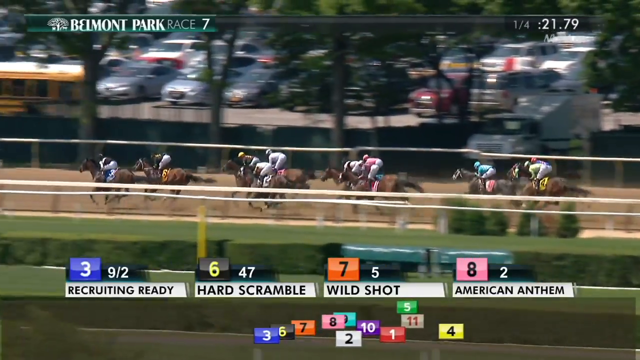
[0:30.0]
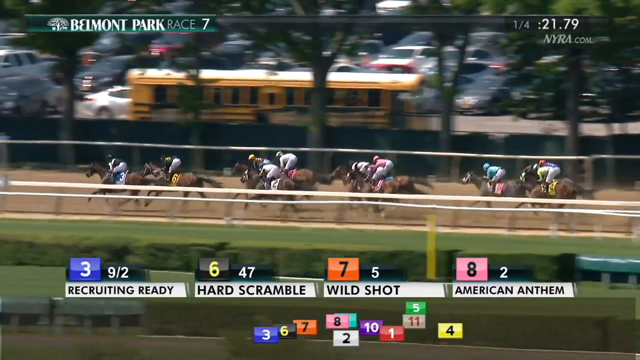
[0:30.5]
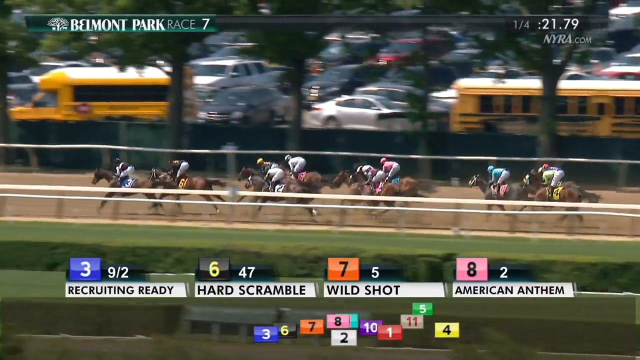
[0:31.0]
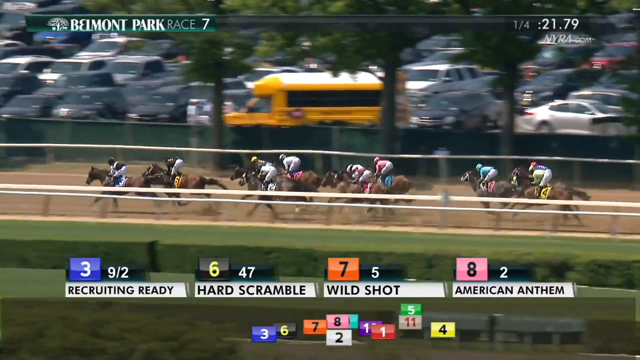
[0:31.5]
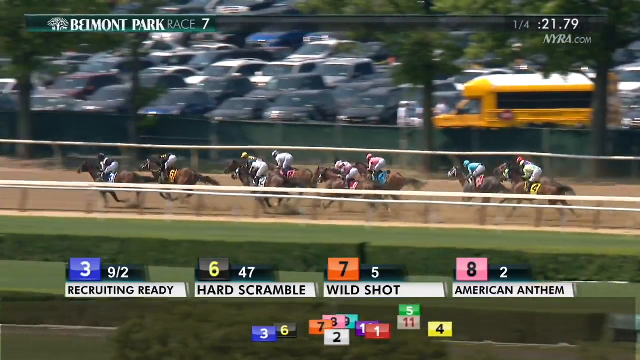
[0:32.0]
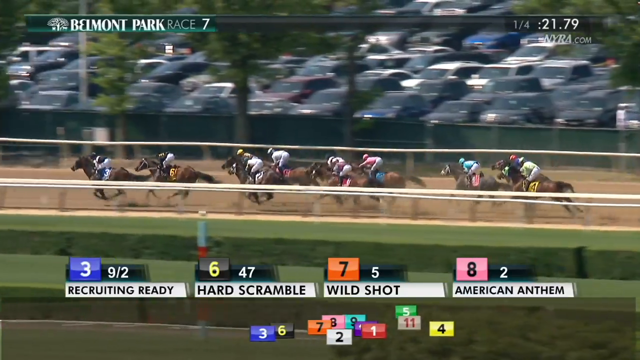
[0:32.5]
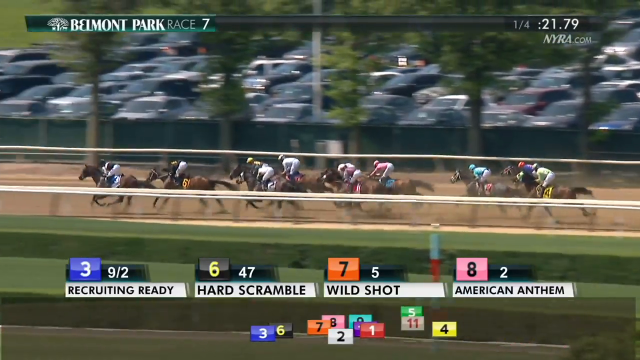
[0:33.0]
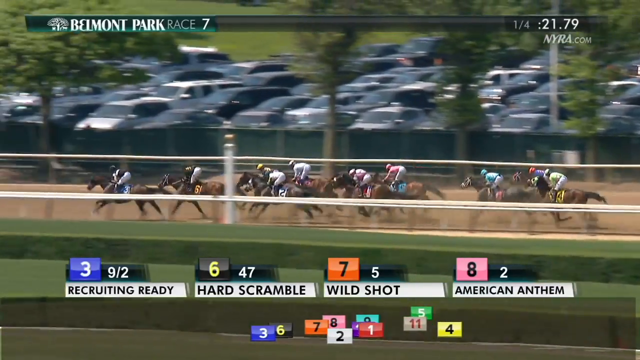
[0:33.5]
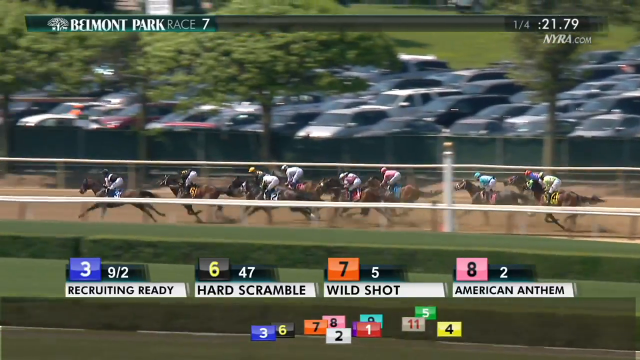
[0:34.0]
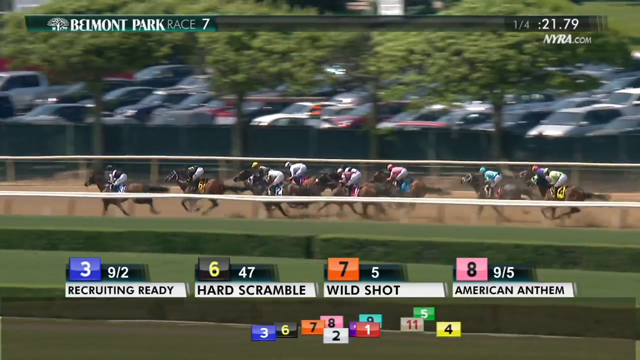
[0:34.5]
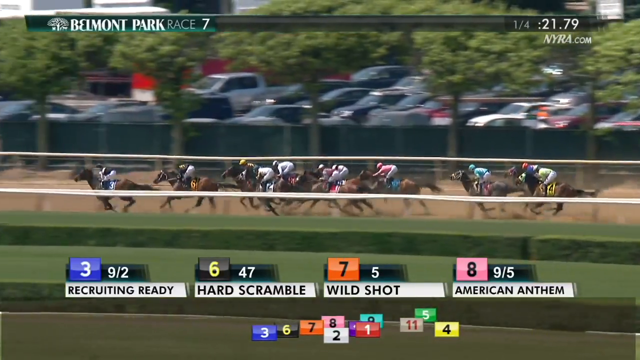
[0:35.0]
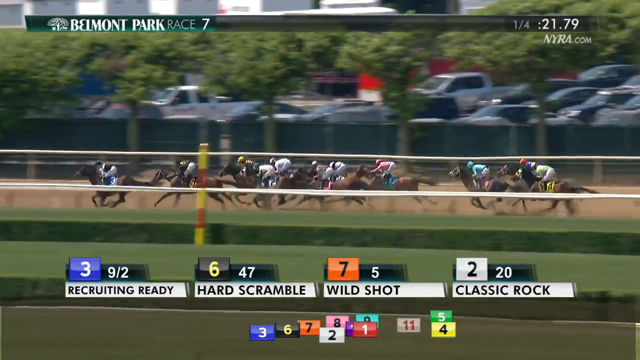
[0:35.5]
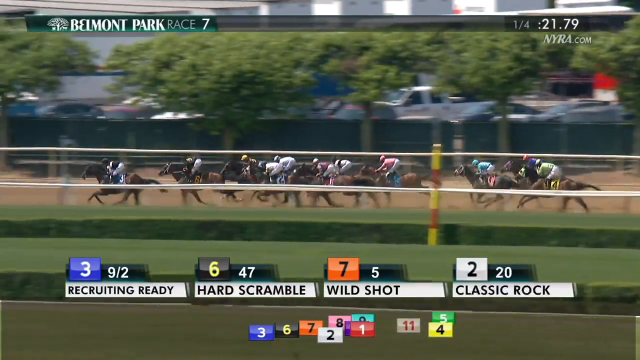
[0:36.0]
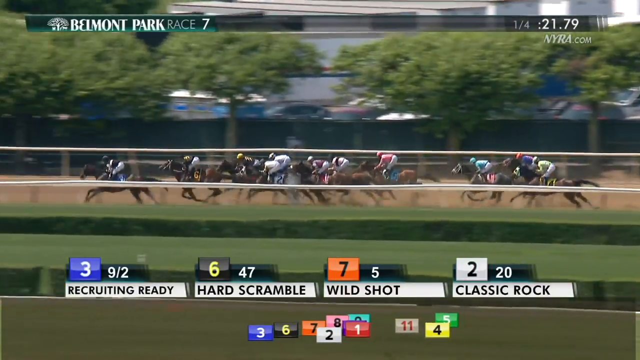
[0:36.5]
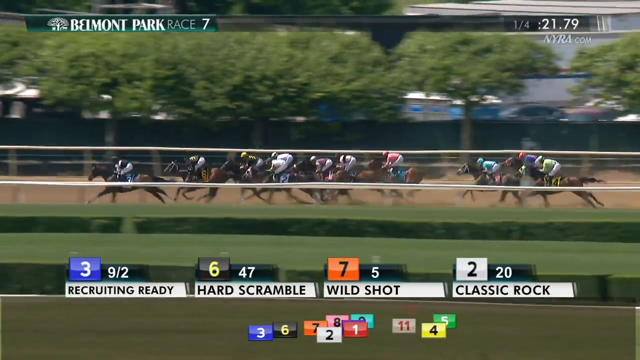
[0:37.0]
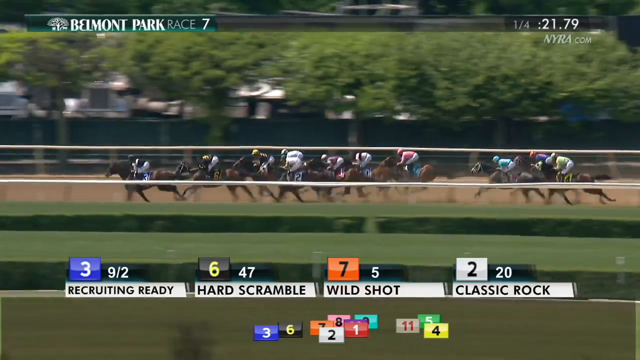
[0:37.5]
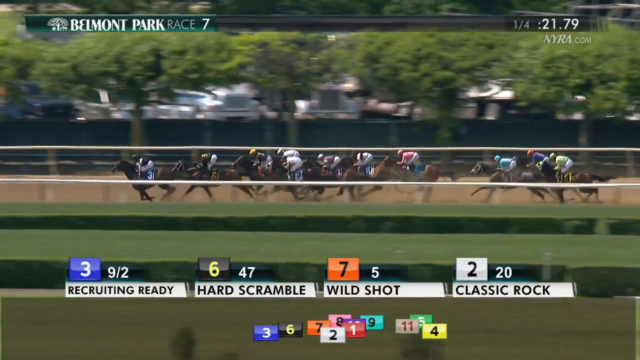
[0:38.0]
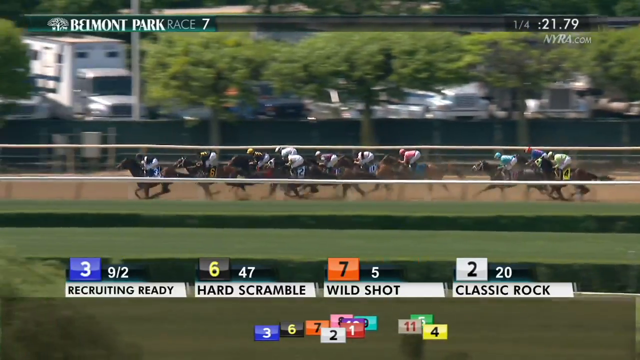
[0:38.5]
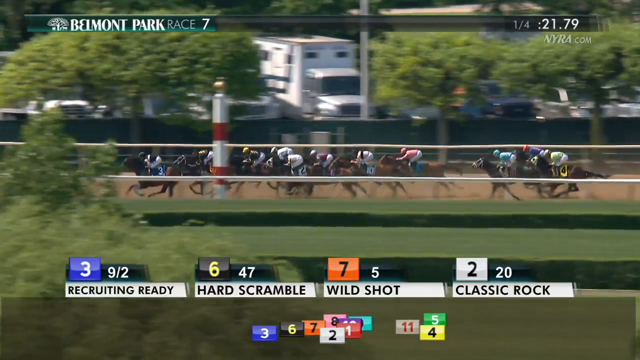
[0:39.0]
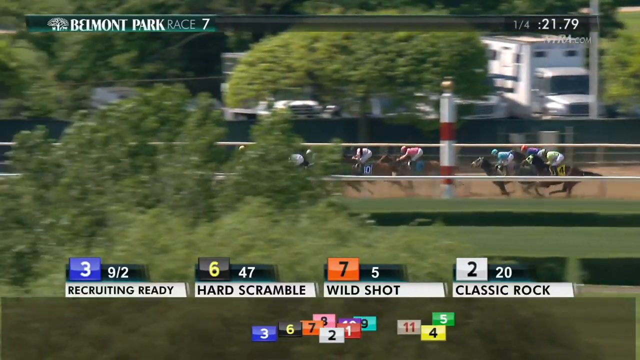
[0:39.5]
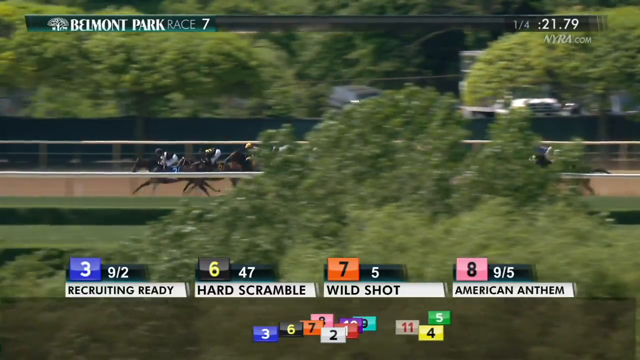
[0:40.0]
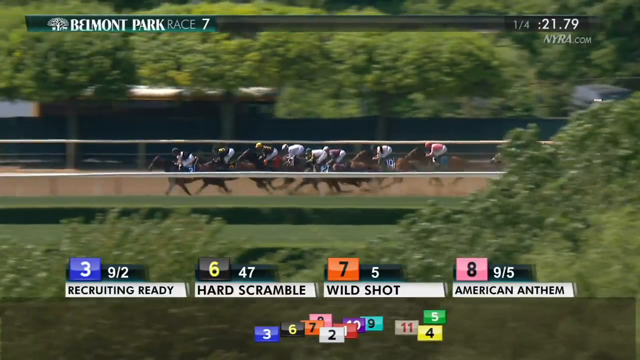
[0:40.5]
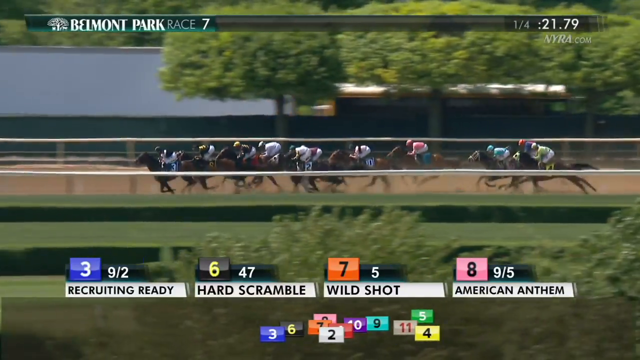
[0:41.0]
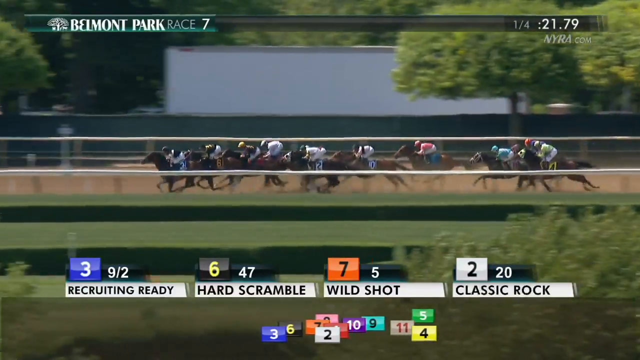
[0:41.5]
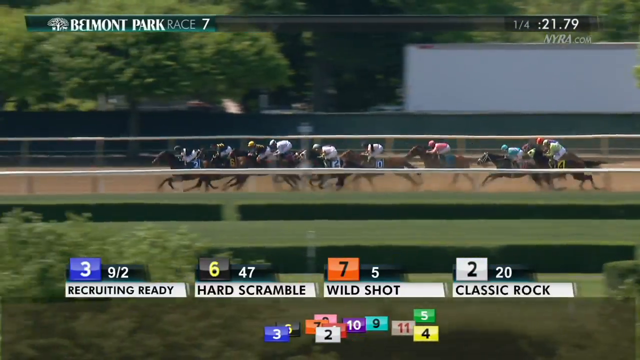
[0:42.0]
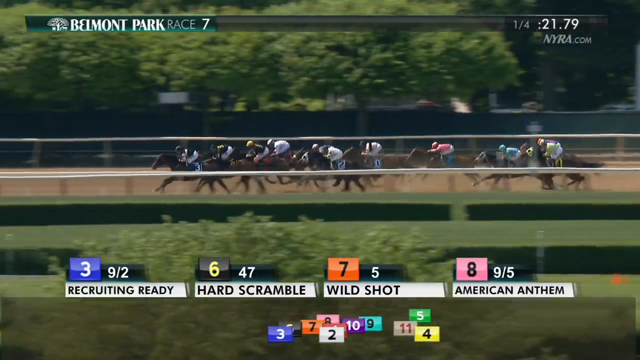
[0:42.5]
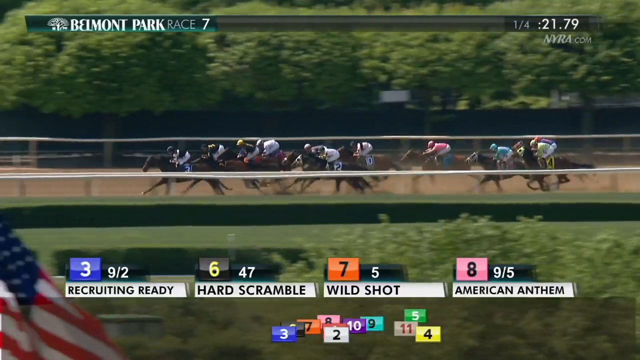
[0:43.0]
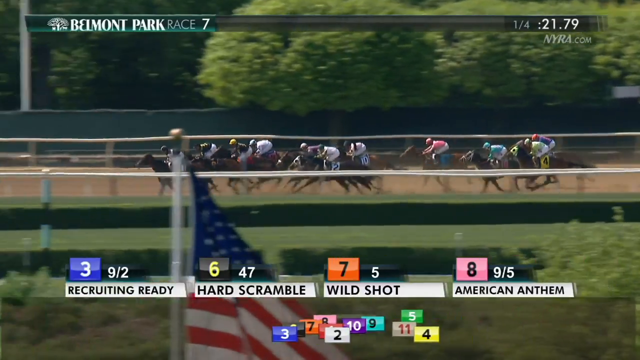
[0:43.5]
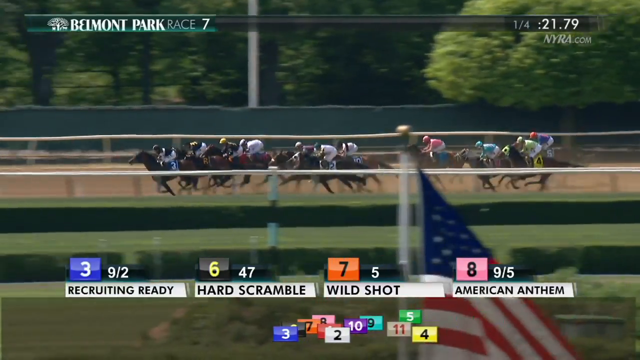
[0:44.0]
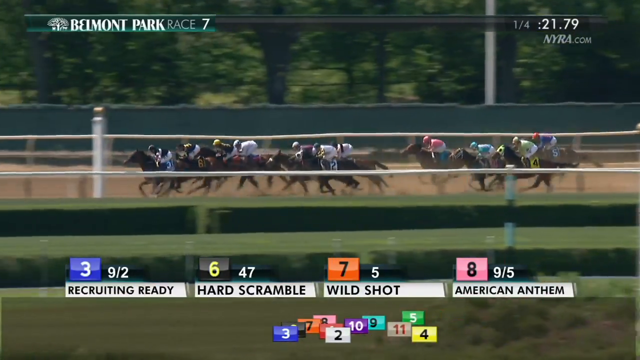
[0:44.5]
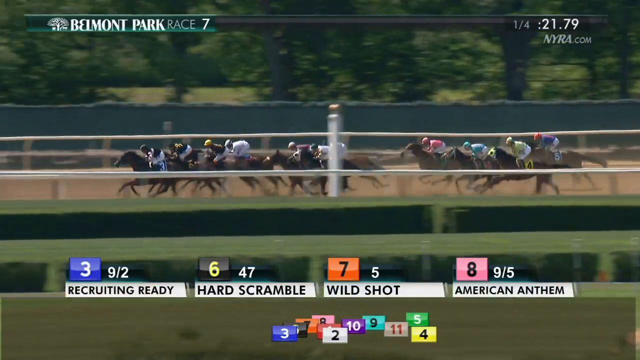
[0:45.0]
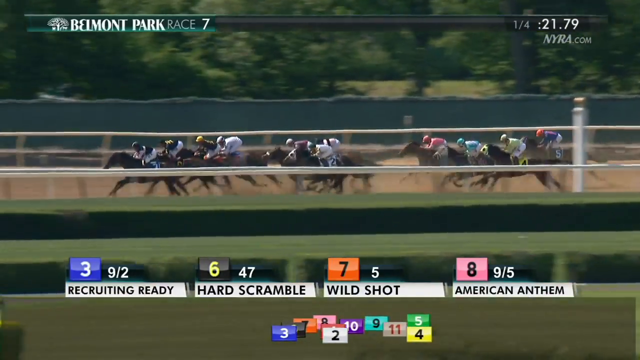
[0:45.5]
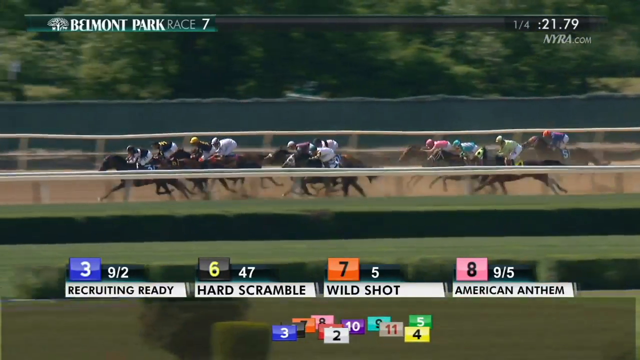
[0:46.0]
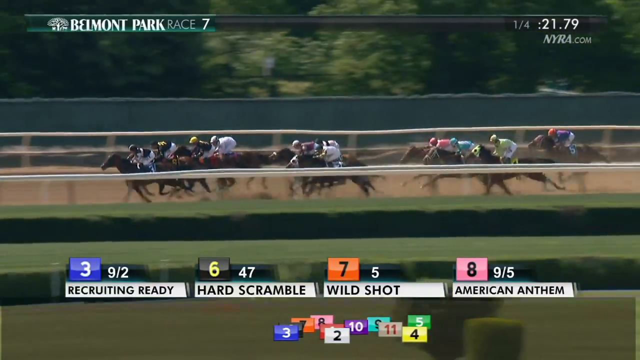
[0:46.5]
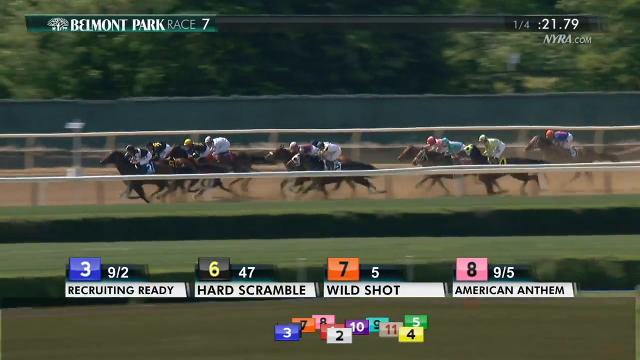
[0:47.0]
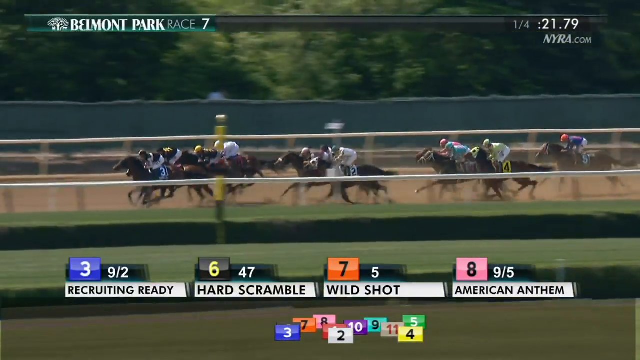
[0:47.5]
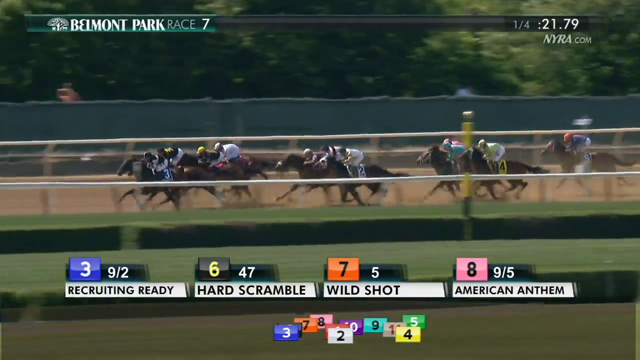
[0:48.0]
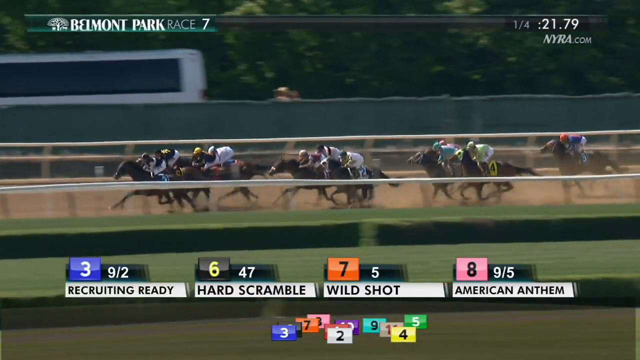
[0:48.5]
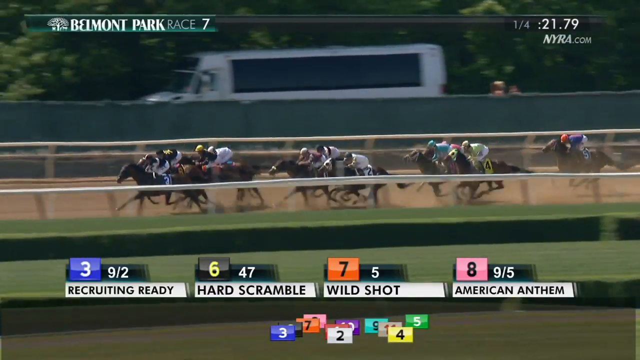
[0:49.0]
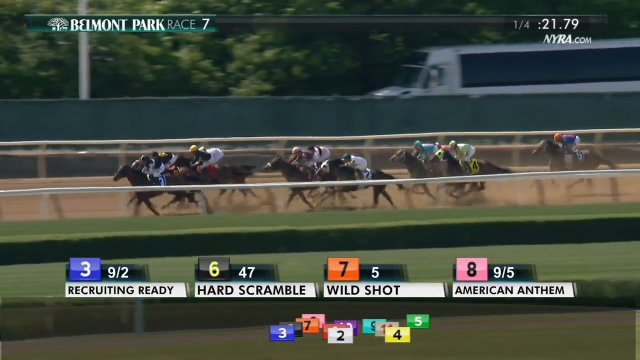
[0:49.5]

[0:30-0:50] On the screen it reads "21.79.14". In the distance is a parking lot with a couple of cars and buses parked parallel, and about five very tall trees between the buses, rising well past them with their tops out of view. The camera zooms out a little. Another pole appears, solid white and looking like a street pole with a gold globe on top. Number three starts to pull away from the number six horse. Hard Scramble, in second place, is moving quickly and bobbing his head but is not quite as fast. Number six comes around the outer part of number three, though it is hard to tell because number three partly shields him, as they come around the turn closer to the camera. The top four are the three horse Recruiting Ready, then six Hard Scramble, seven Wild Shot, and in fourth place American Anthem. At the bottom, small colored boxes float in showing race positions; the orange box for number seven is in third, and number eight is far behind, neck and neck with numbers nine and two.